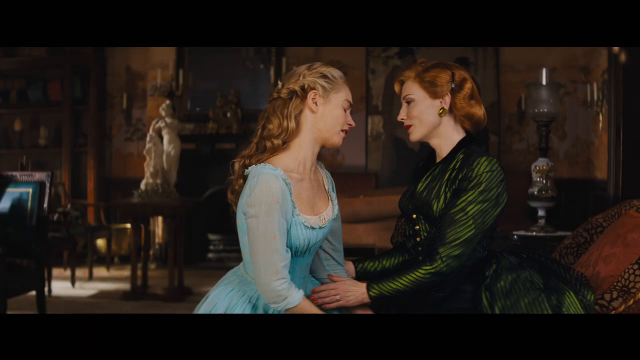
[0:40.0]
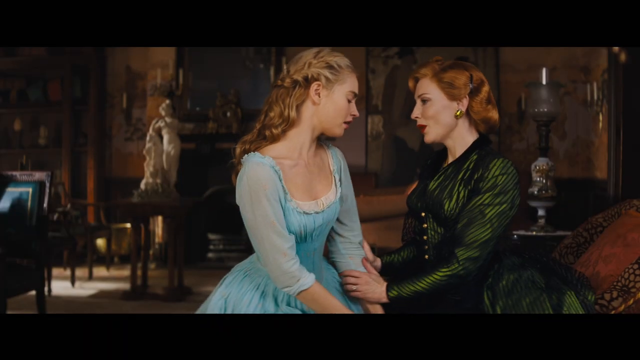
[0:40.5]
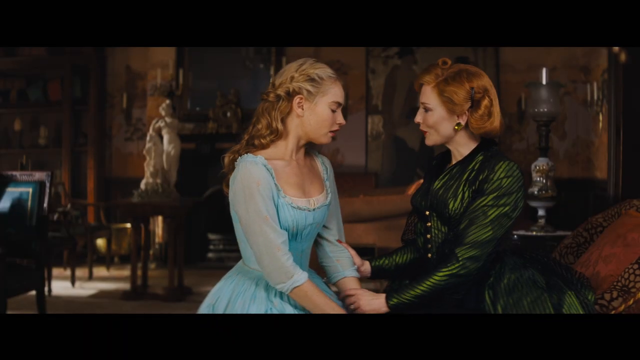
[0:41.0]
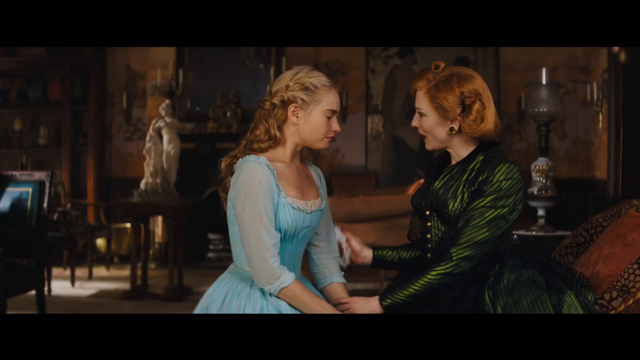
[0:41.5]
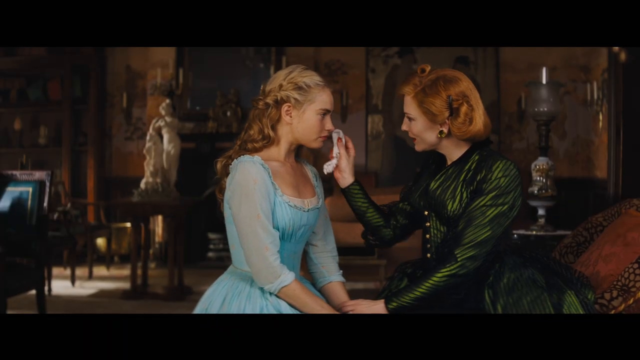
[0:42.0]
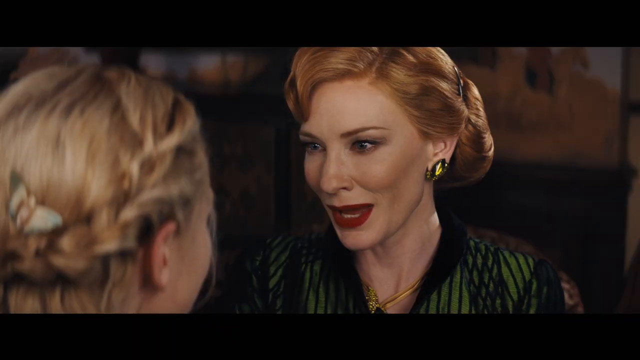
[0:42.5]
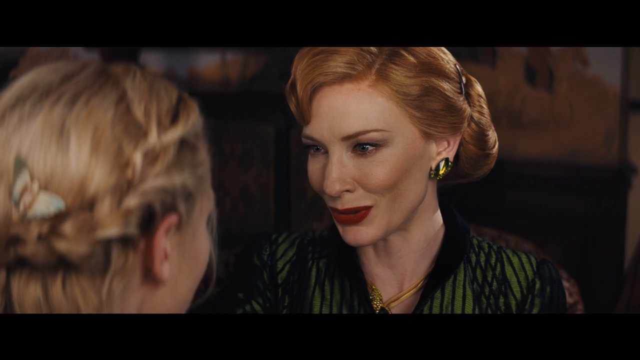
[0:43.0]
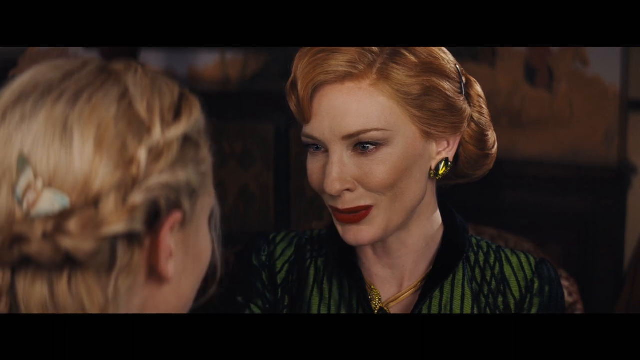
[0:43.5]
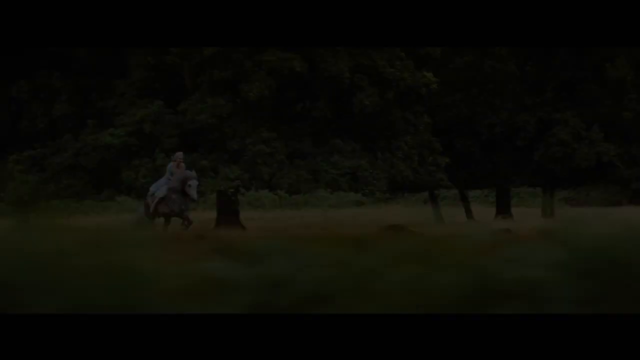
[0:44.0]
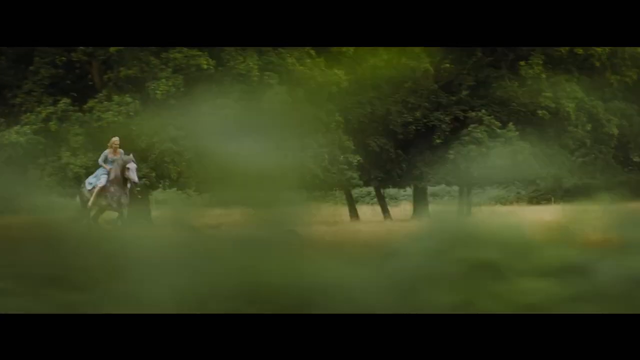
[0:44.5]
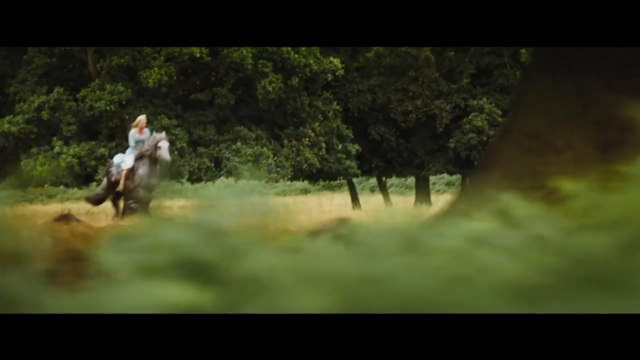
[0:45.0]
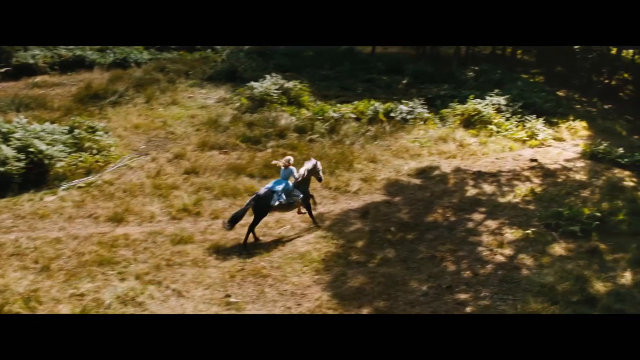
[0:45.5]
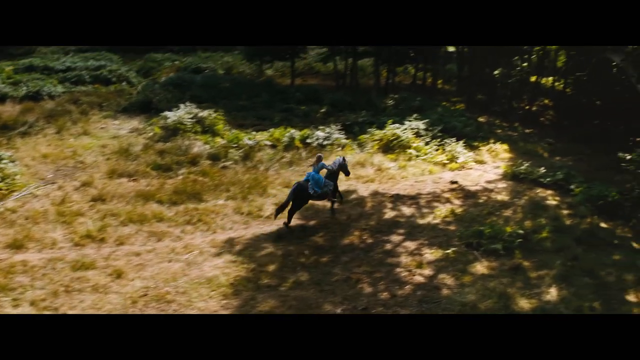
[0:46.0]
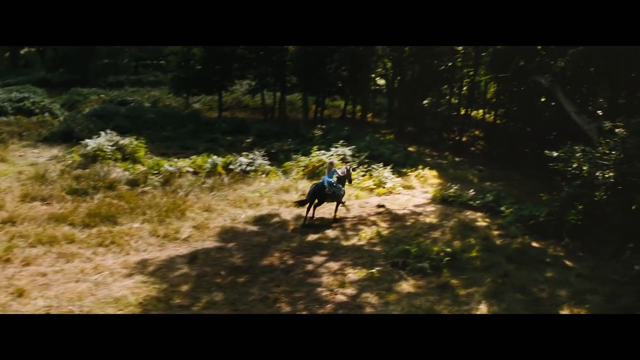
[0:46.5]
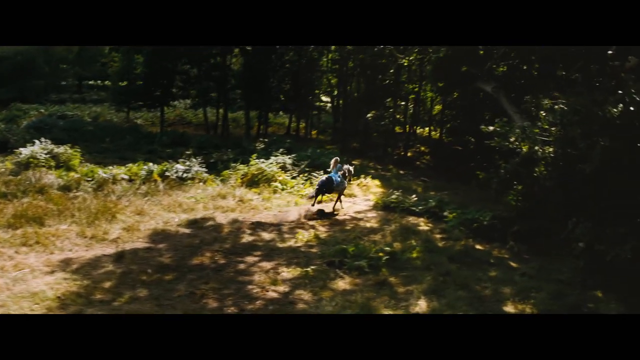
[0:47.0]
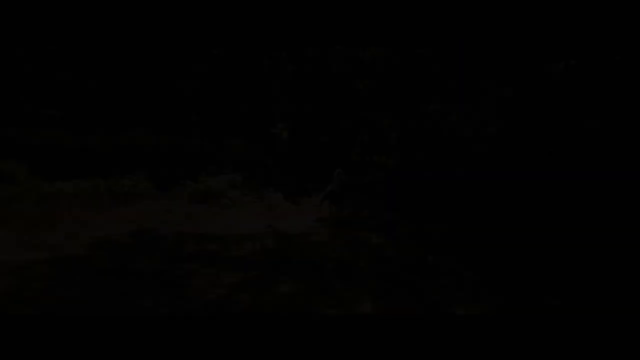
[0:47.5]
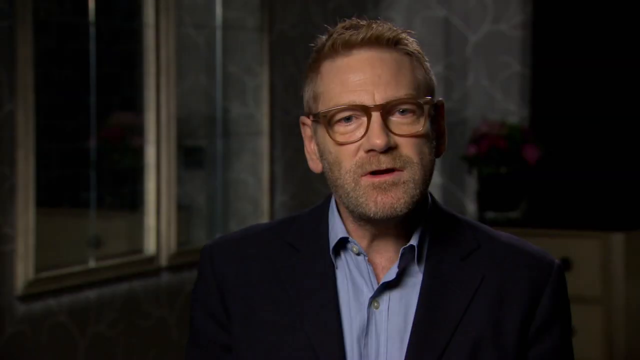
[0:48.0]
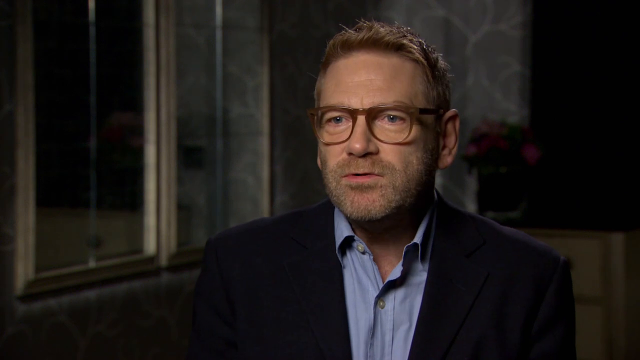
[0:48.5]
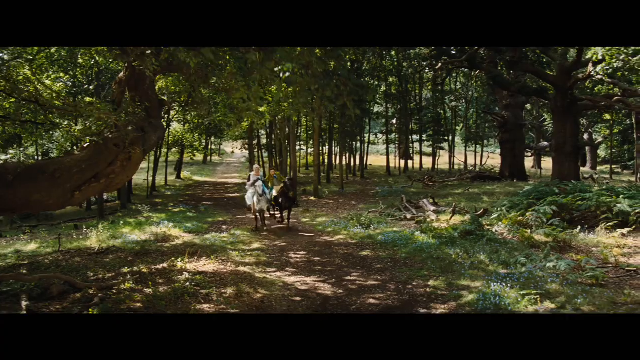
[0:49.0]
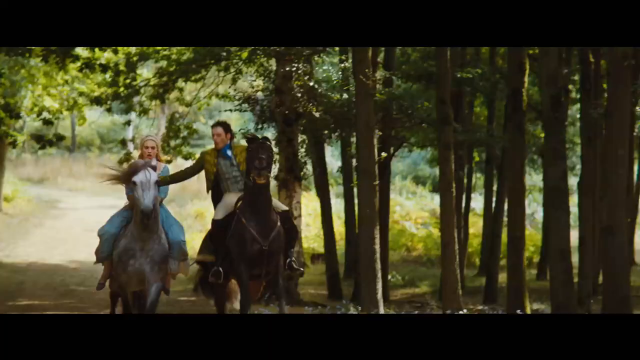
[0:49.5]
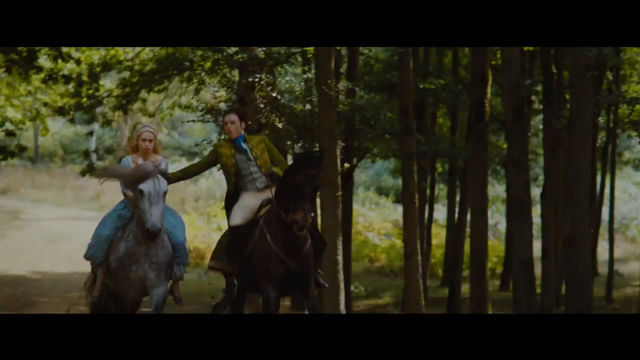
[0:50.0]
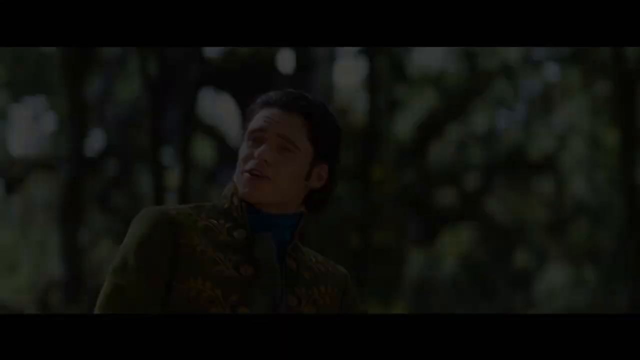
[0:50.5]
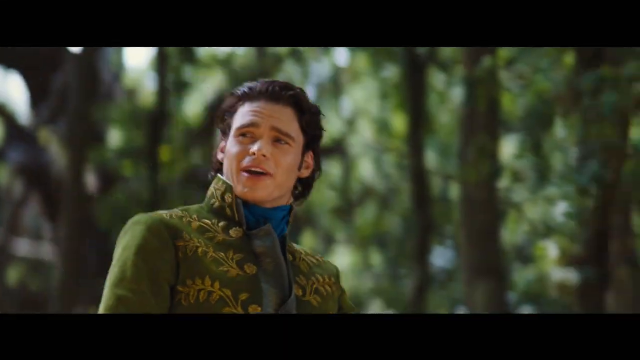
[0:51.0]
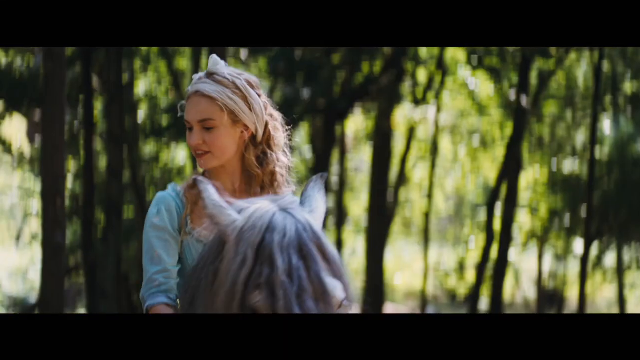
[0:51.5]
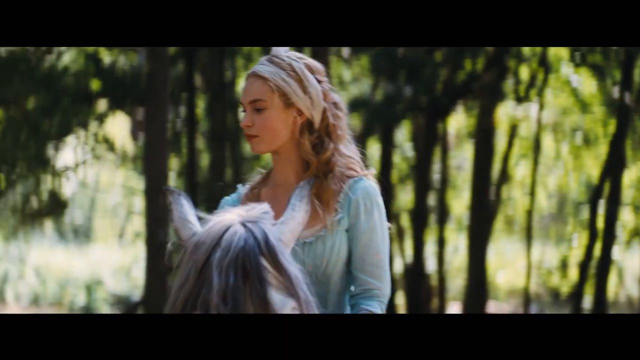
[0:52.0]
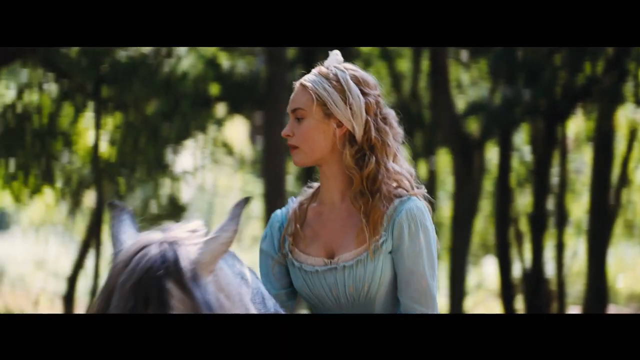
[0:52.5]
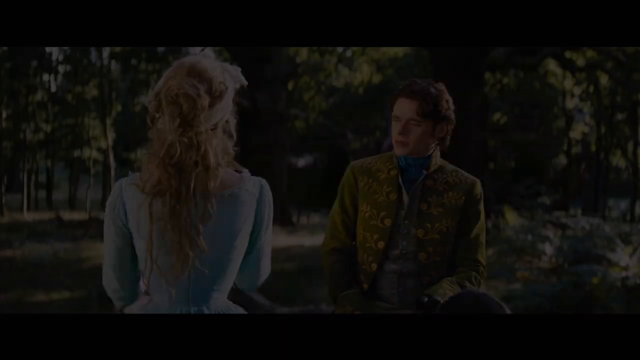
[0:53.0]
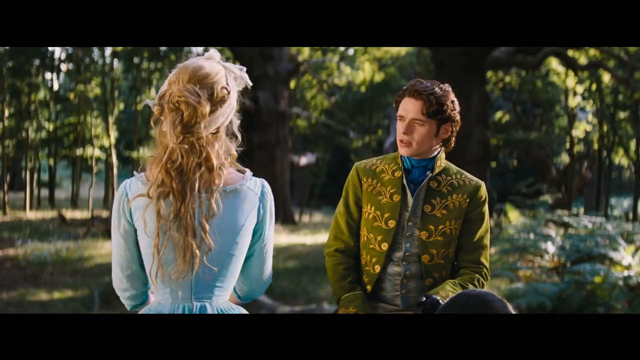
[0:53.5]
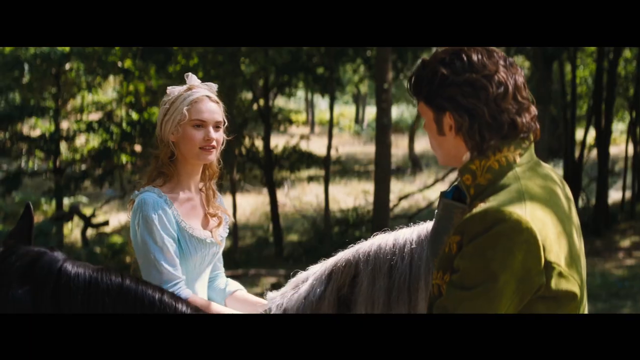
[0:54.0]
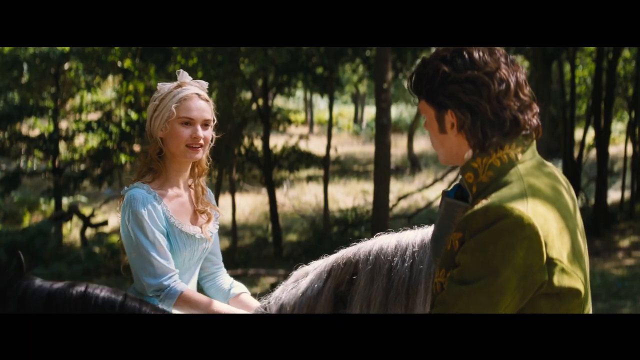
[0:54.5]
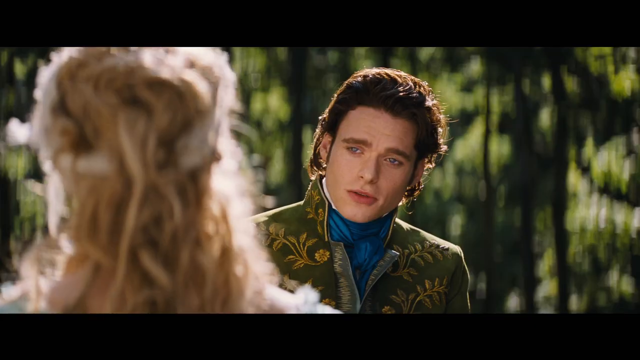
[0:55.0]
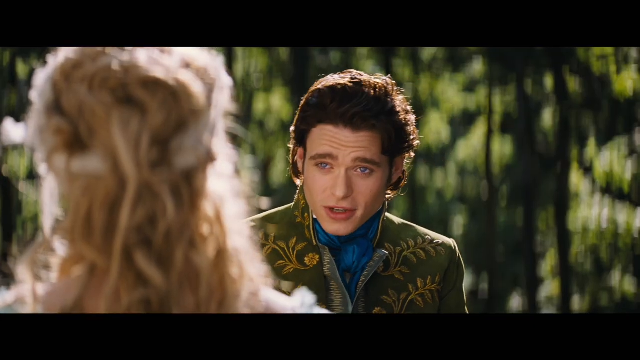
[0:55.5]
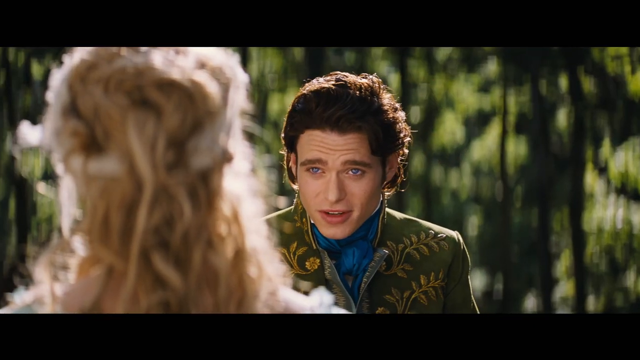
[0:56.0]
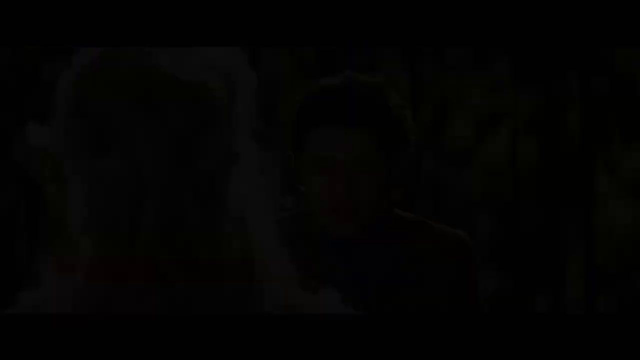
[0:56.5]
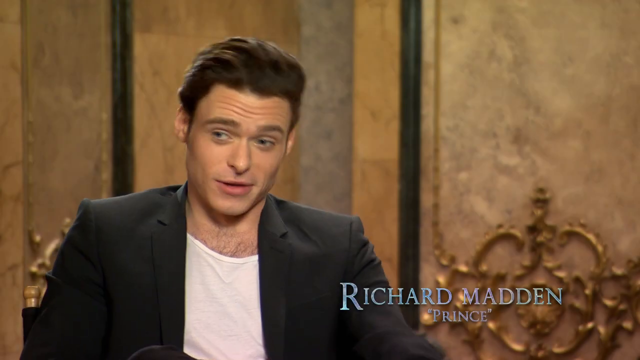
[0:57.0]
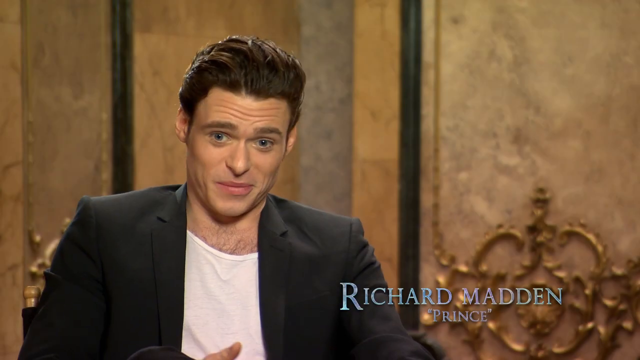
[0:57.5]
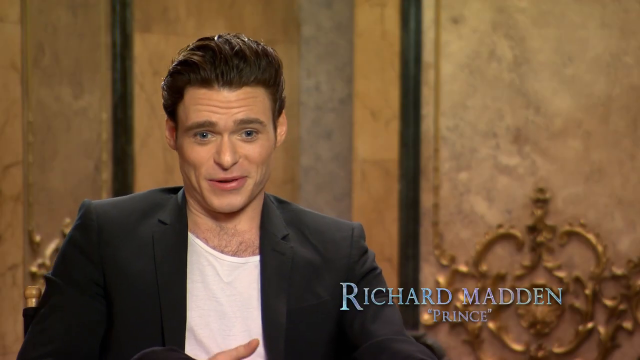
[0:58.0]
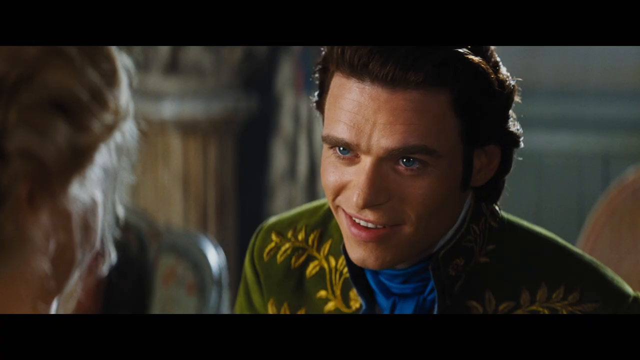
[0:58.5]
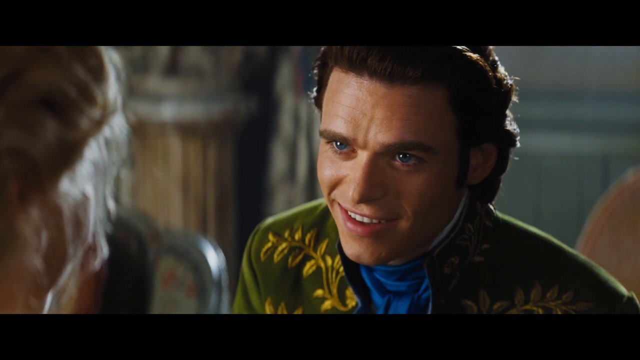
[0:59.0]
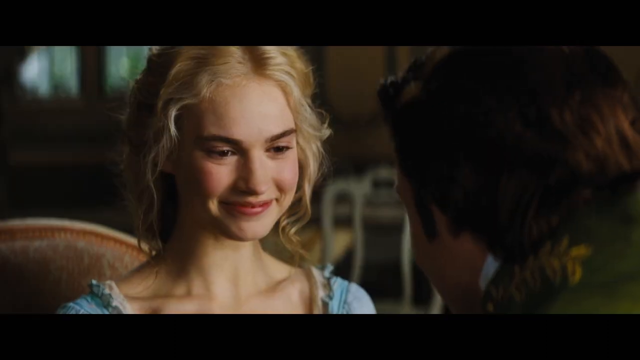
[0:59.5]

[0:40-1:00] The stepmother and Cinderella are seated in the sitting room, talking. One of them uses a handkerchief to wipe away tears. The stepmother wears a green gown with a black fitted net, while Cinderella wears a blue gown. Later, Cinderella rides a white horse through a grassy field with many trees behind it. On the way she meets a man on a brown horse, a noble prince. Richard Madden played the role of the prince.